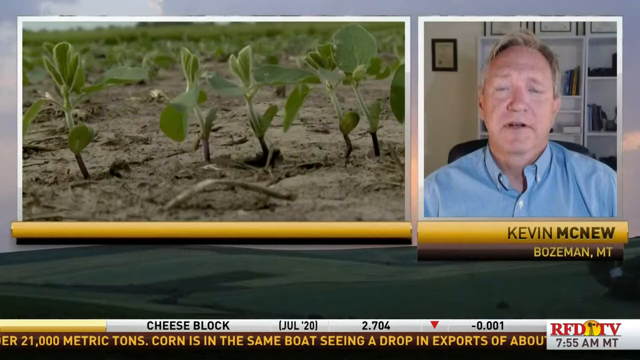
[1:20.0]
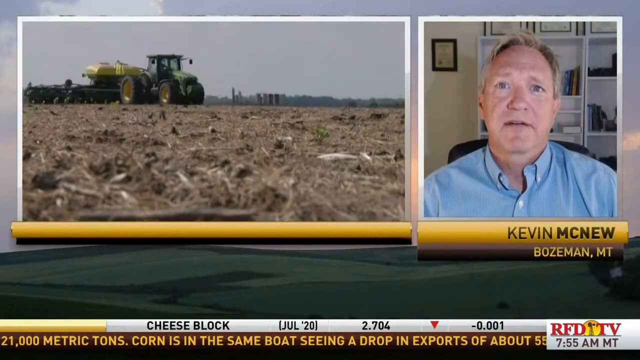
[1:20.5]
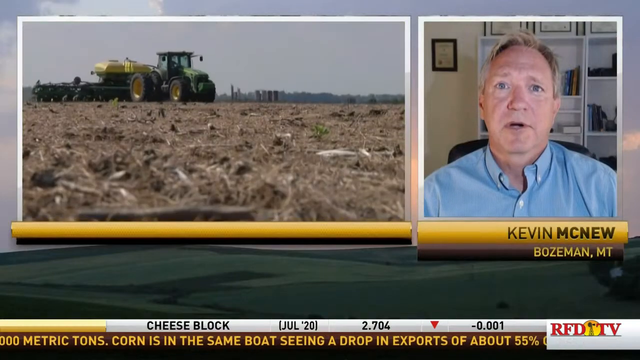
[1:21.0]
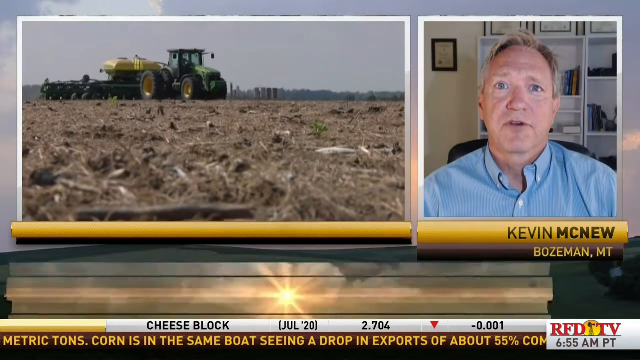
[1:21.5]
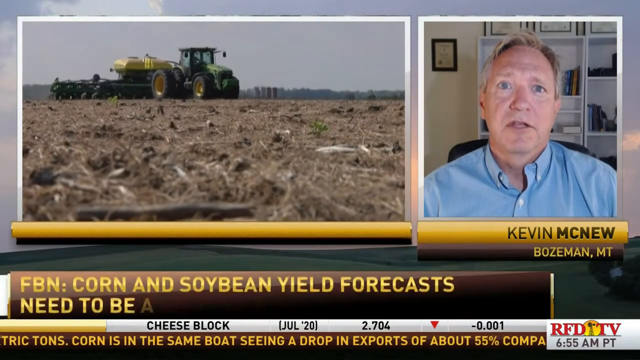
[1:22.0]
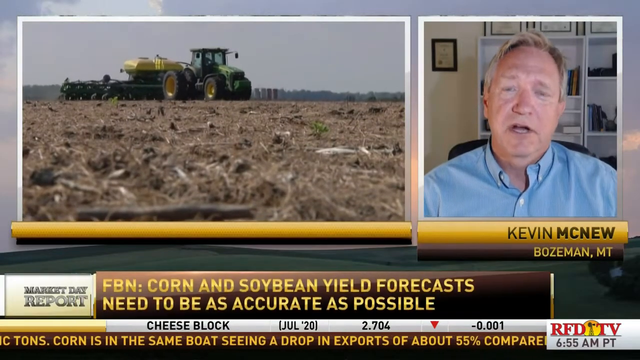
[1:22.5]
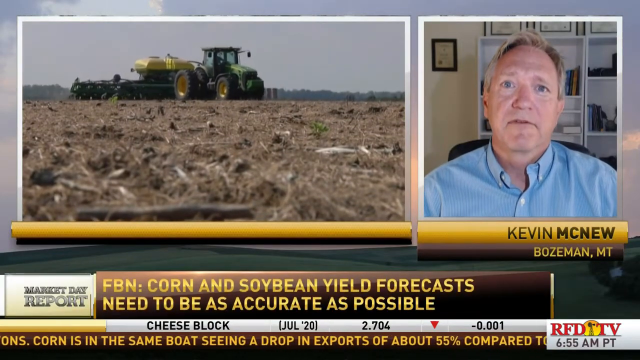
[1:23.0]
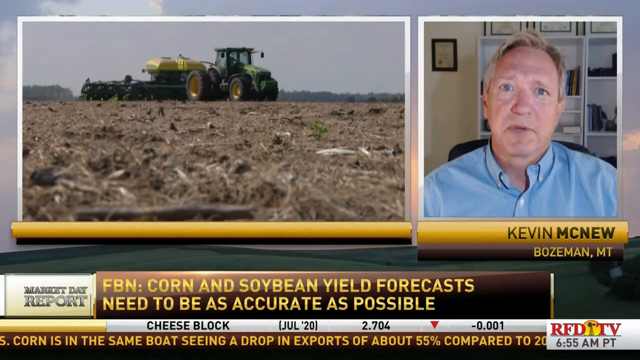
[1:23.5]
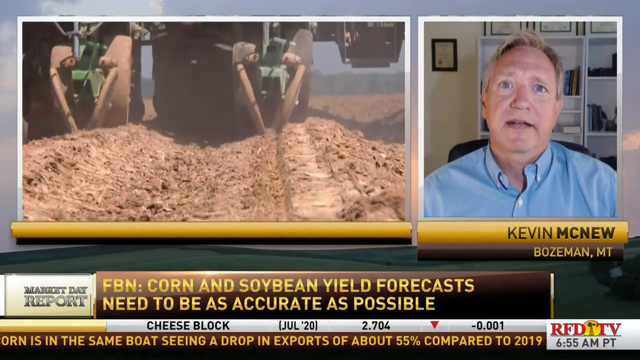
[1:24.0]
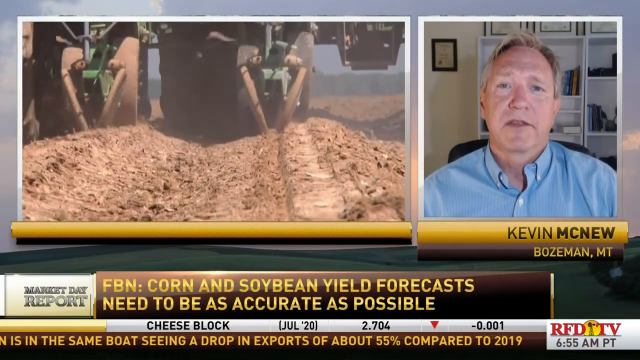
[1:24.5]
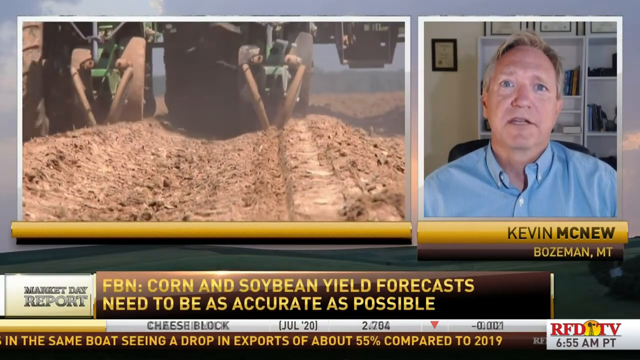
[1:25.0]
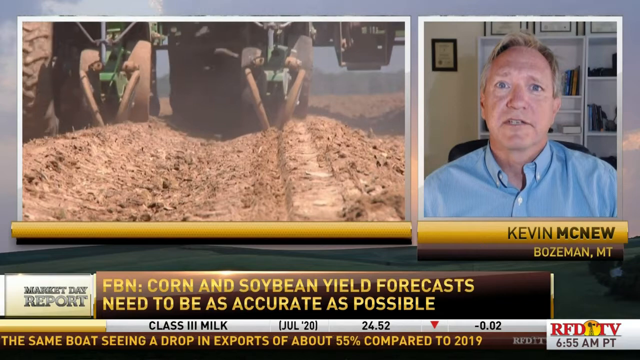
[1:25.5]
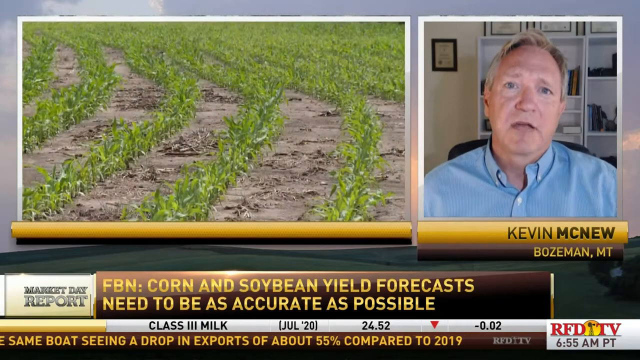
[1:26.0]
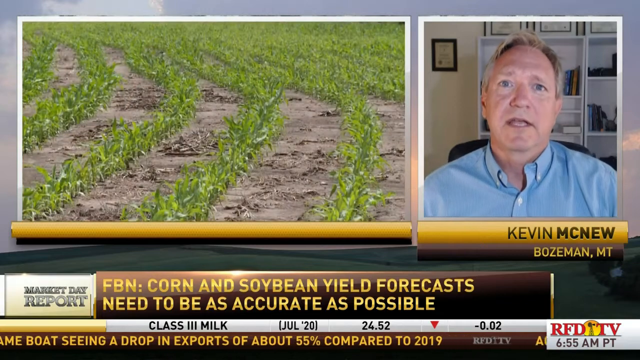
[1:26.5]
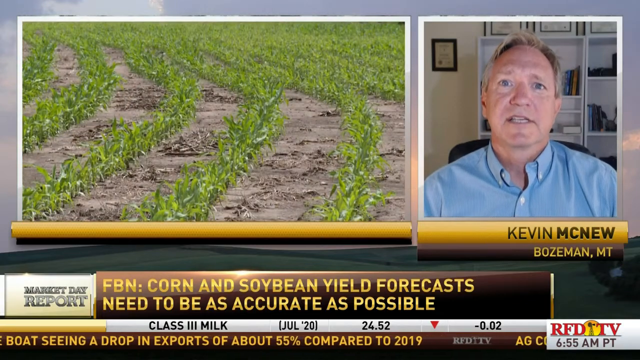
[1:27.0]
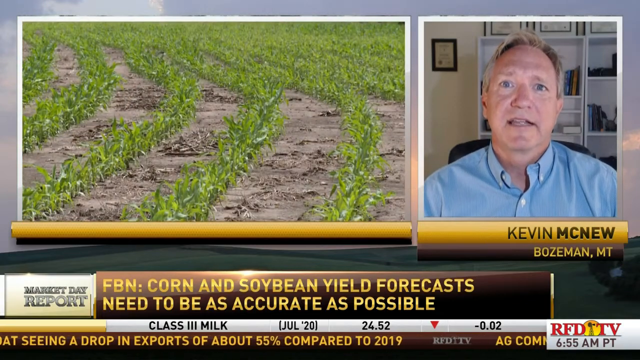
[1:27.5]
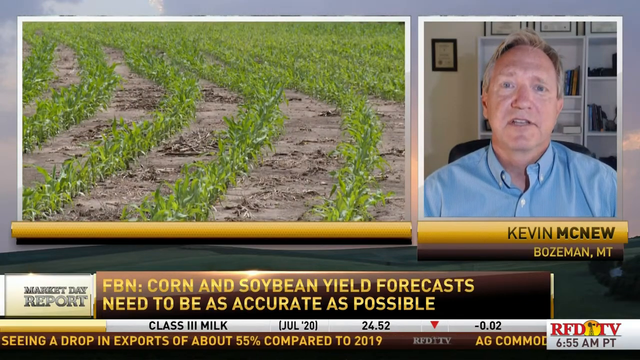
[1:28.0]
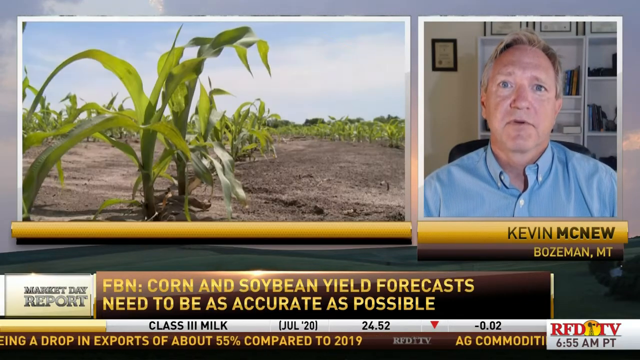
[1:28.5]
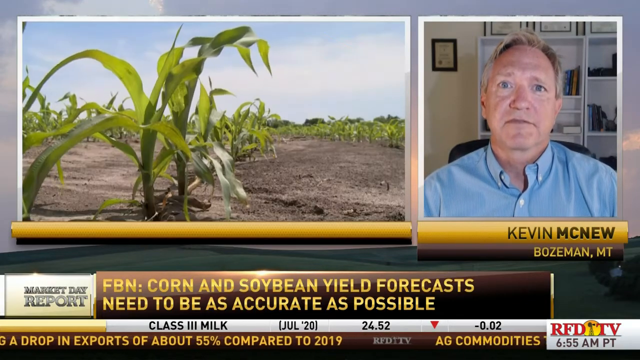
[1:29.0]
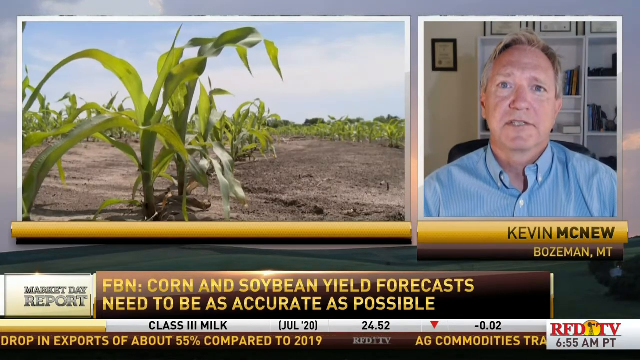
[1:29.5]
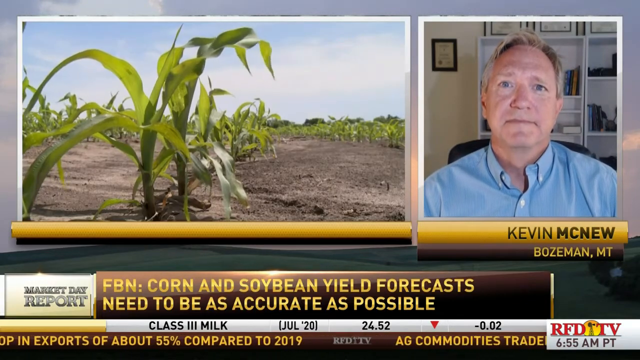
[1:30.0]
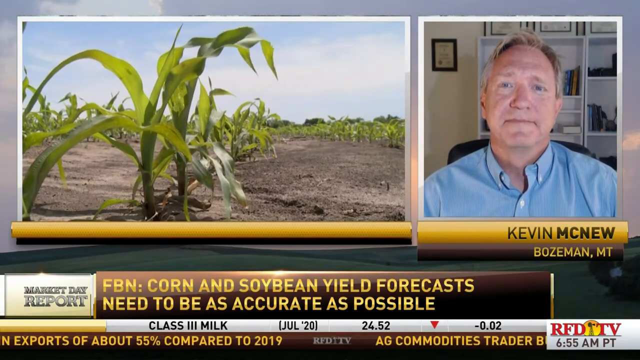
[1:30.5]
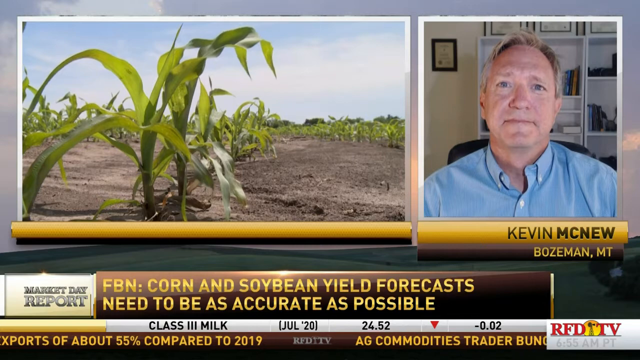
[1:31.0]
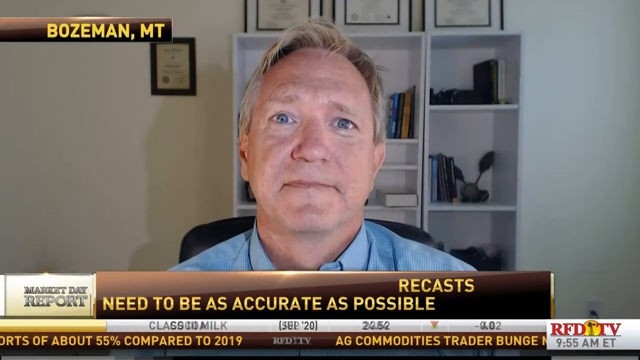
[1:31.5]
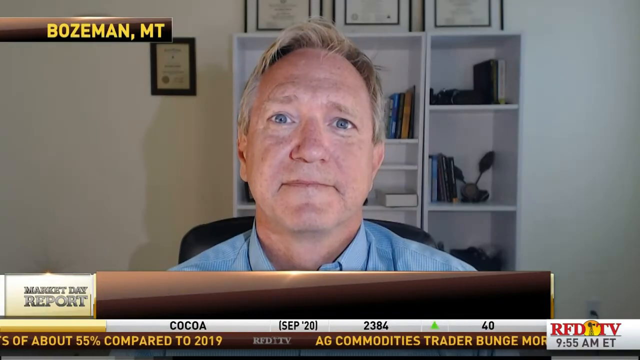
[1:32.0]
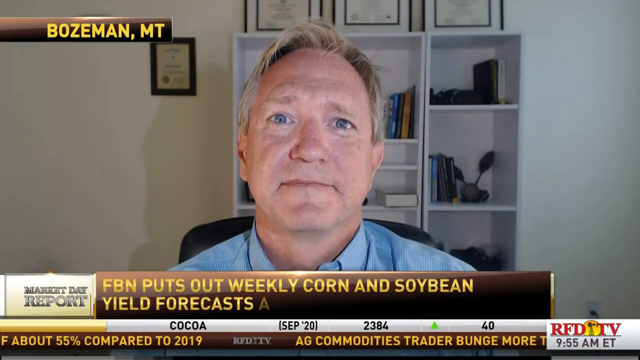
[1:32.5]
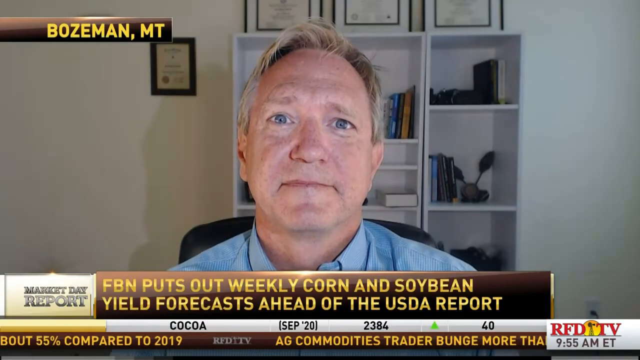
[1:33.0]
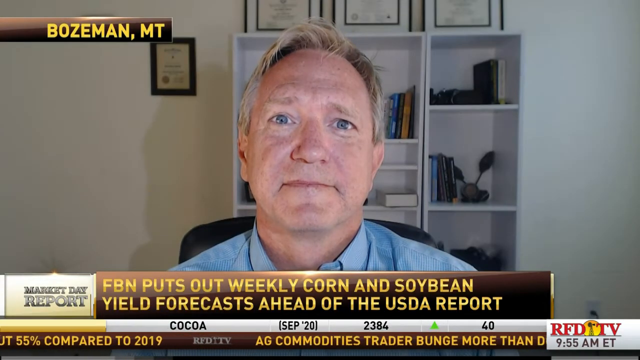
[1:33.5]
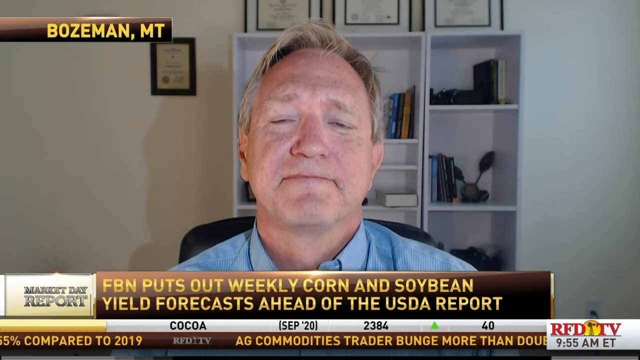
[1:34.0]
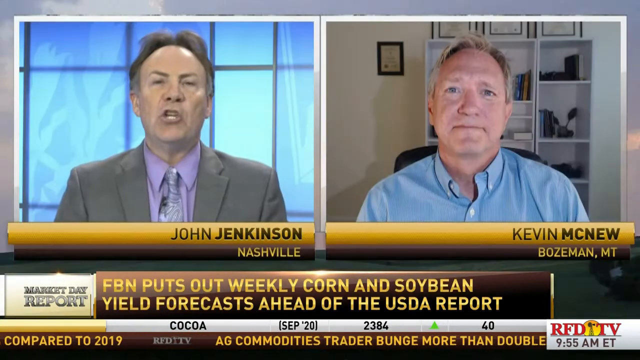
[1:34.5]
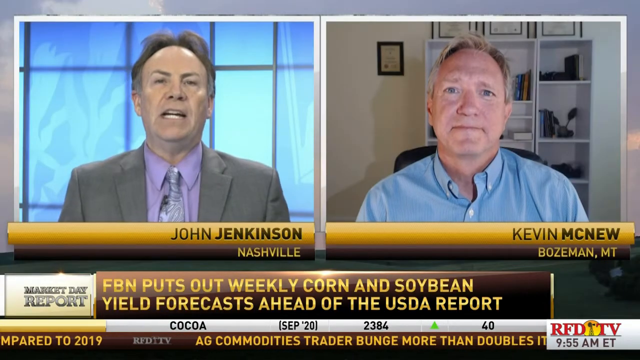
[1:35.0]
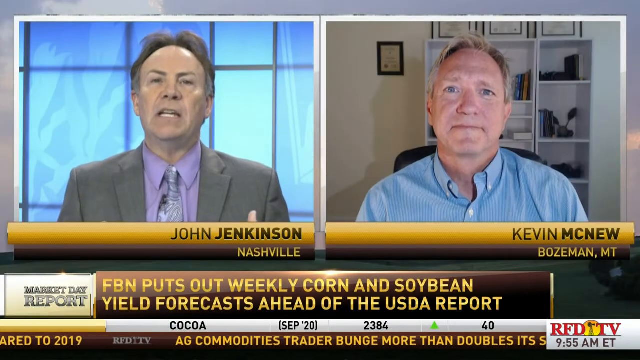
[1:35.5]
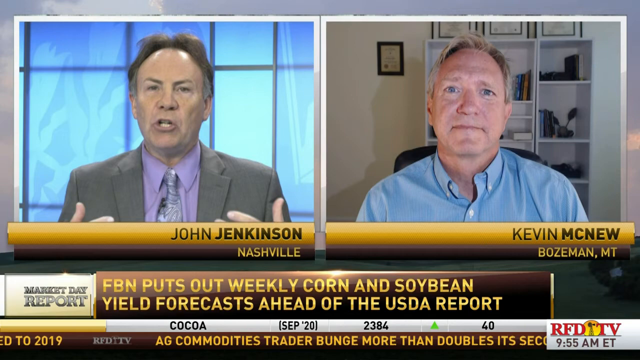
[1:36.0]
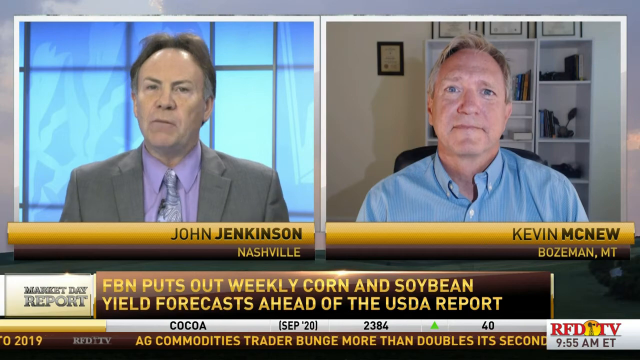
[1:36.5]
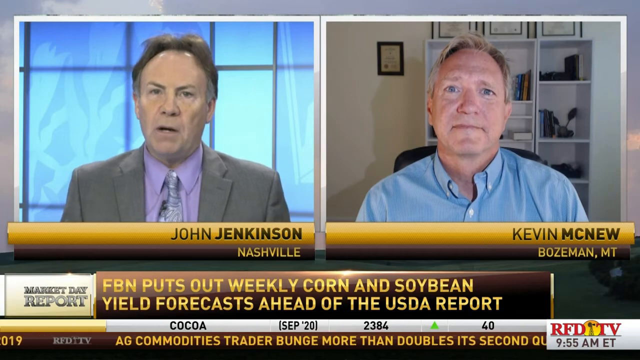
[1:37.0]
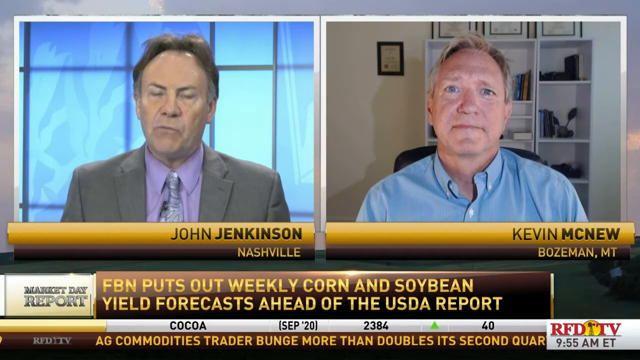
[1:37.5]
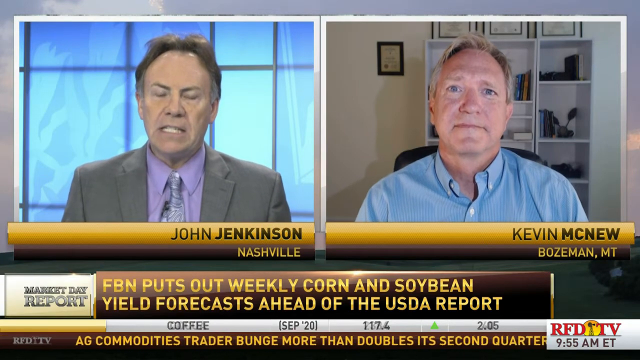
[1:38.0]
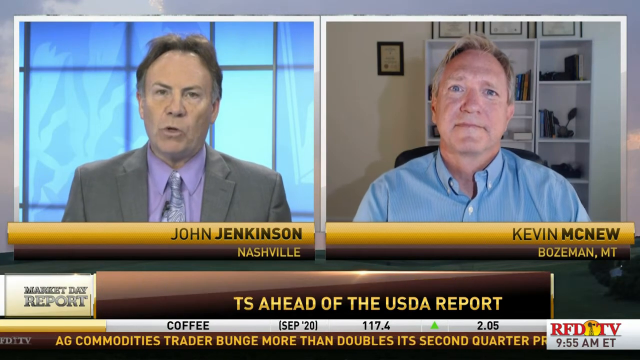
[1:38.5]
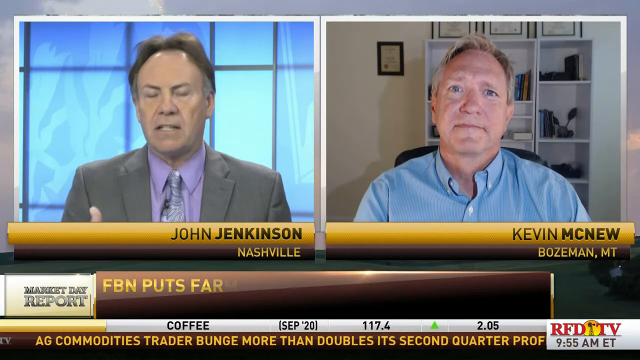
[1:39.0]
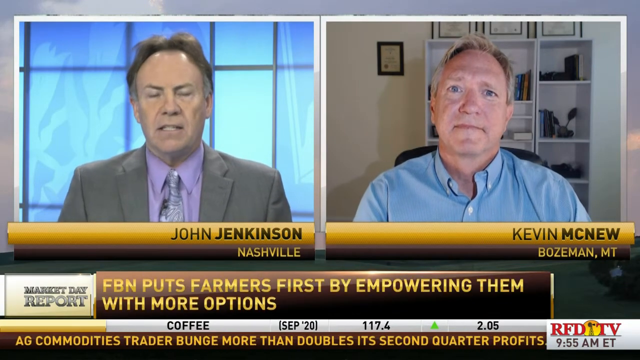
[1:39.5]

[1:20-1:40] The screen splits into two images: one shows Kevin McNeil from Bozeman MT, a white man in a blue top, with a white shelf and some awards behind him; the other shows newly germinating crops. A tractor moves around planting crops. Germinating corn plants appear in straight rows, growing green. John Jenkins from Nashville is then shown.